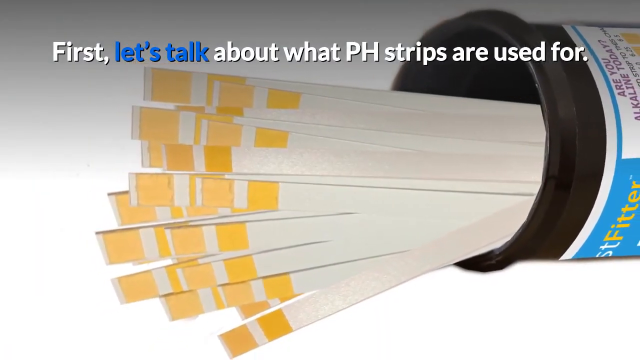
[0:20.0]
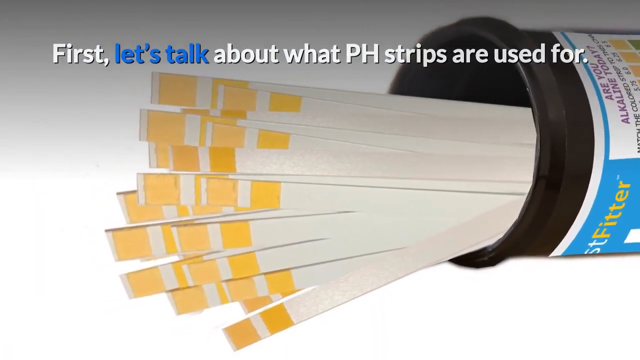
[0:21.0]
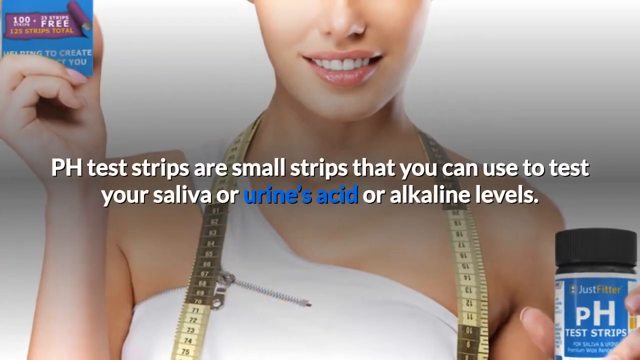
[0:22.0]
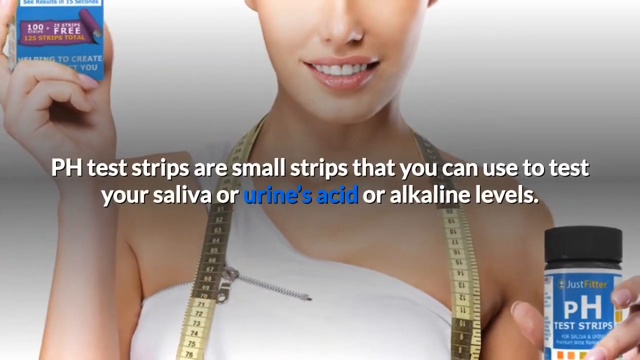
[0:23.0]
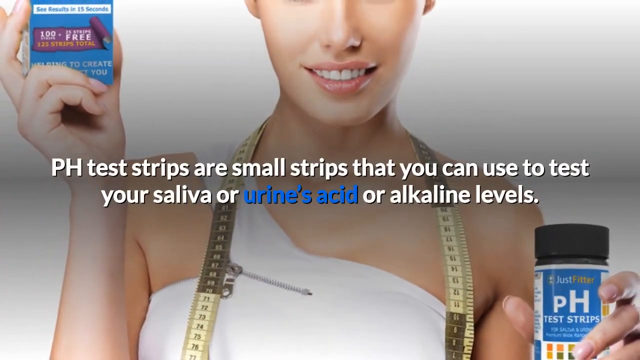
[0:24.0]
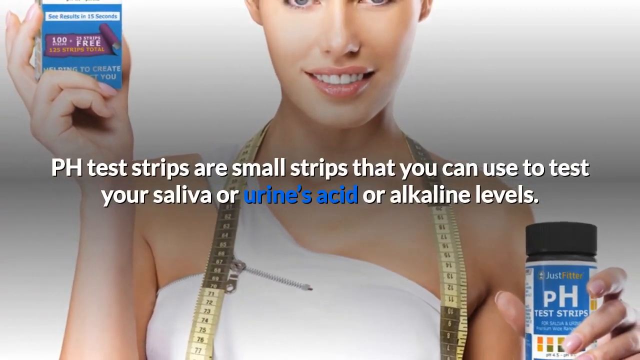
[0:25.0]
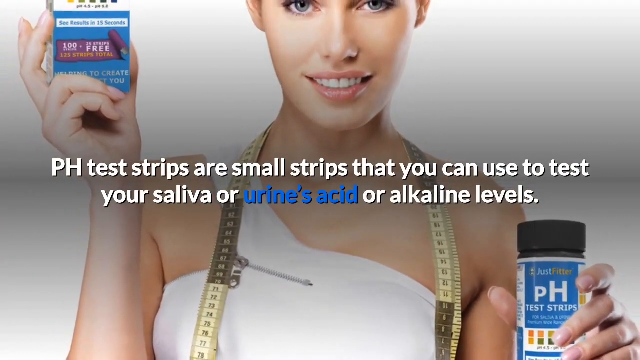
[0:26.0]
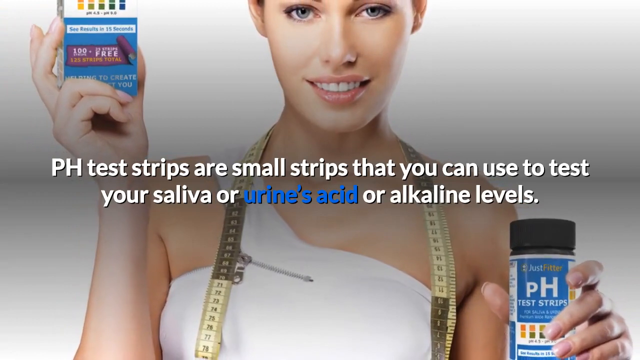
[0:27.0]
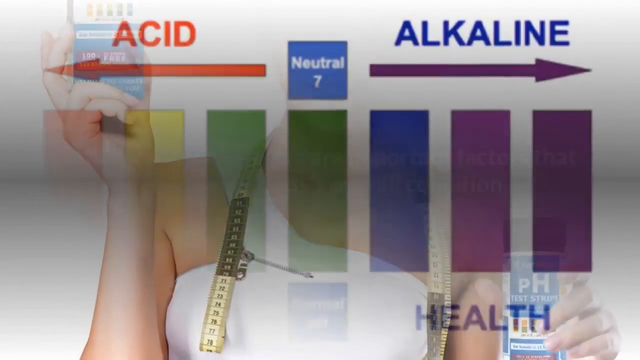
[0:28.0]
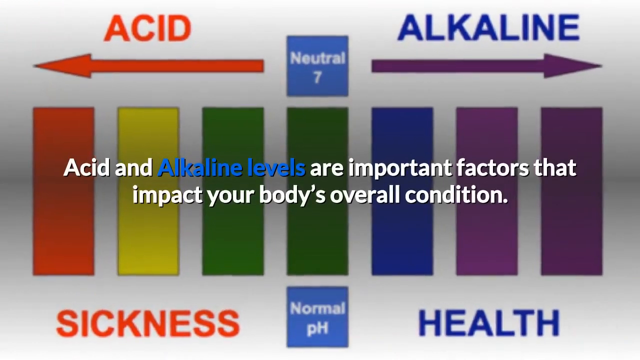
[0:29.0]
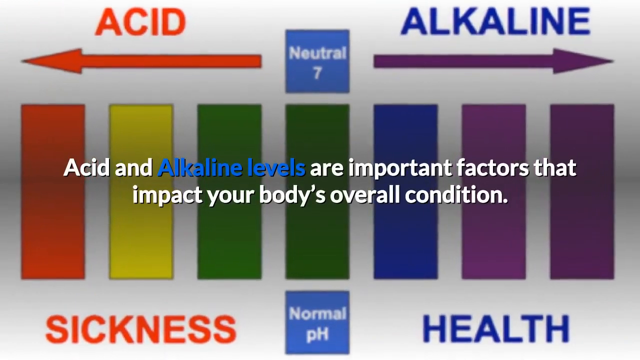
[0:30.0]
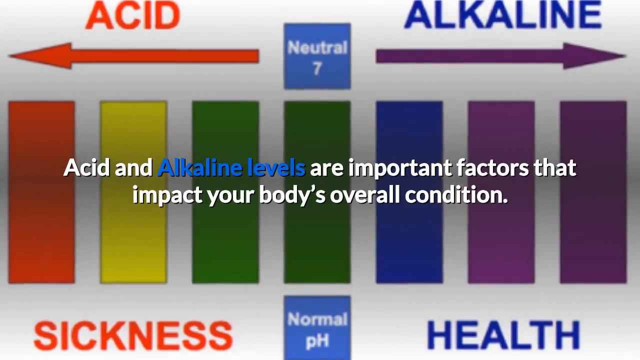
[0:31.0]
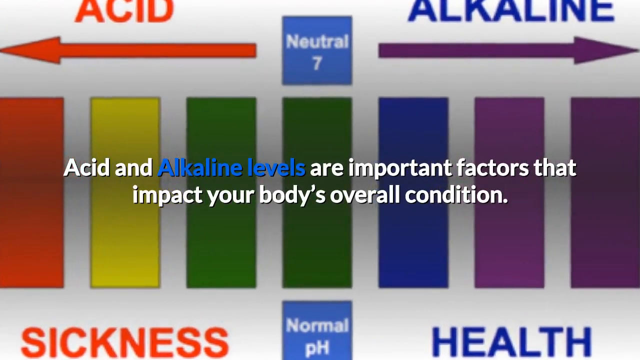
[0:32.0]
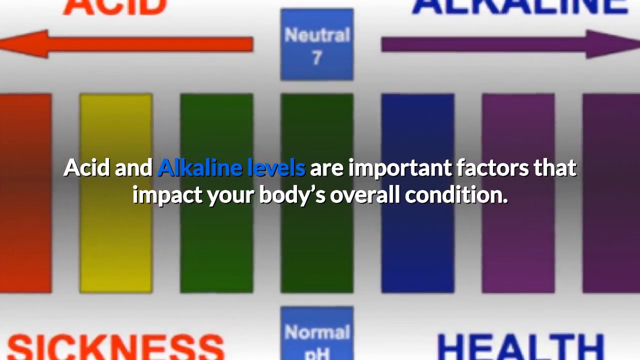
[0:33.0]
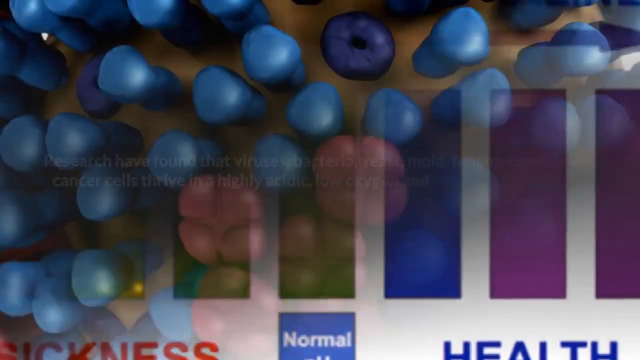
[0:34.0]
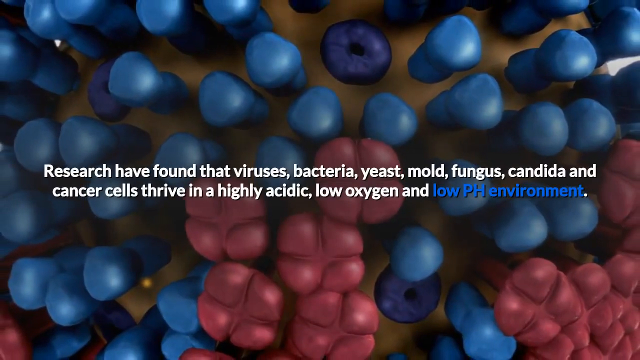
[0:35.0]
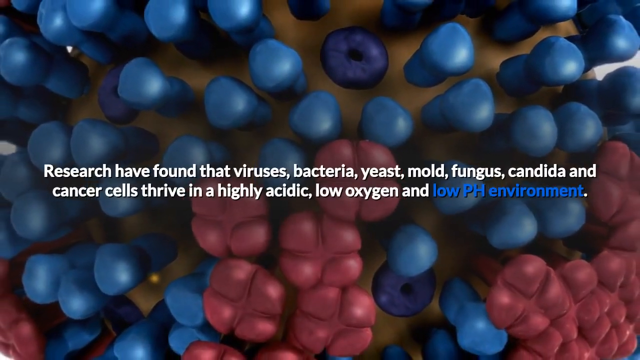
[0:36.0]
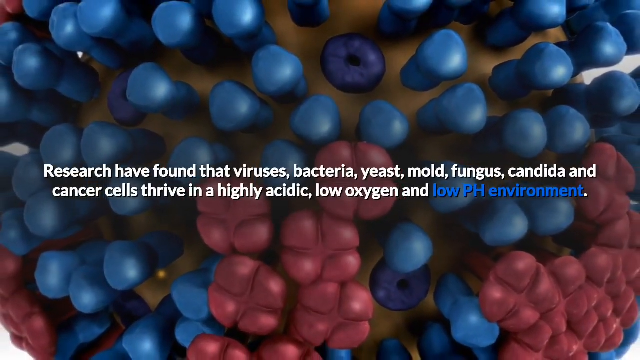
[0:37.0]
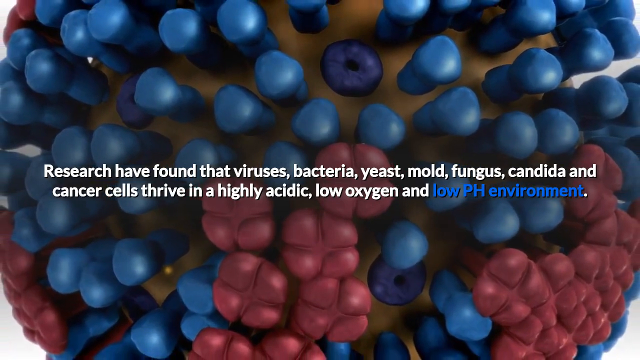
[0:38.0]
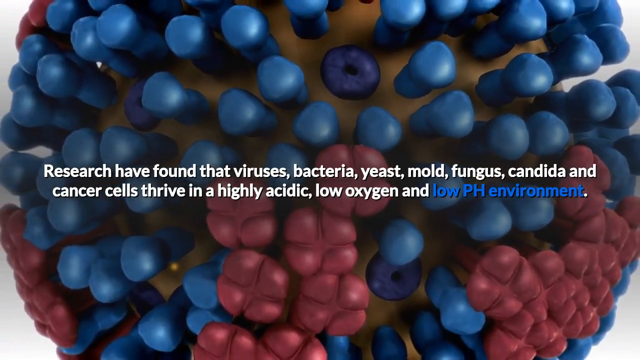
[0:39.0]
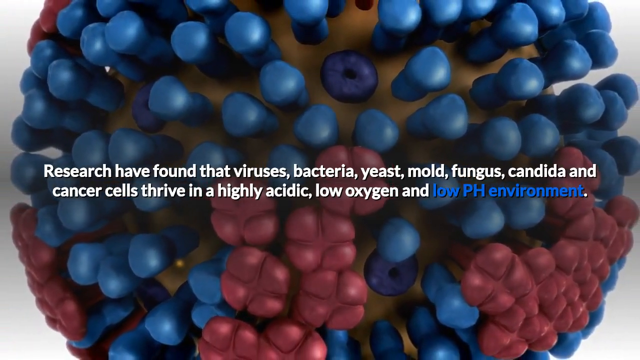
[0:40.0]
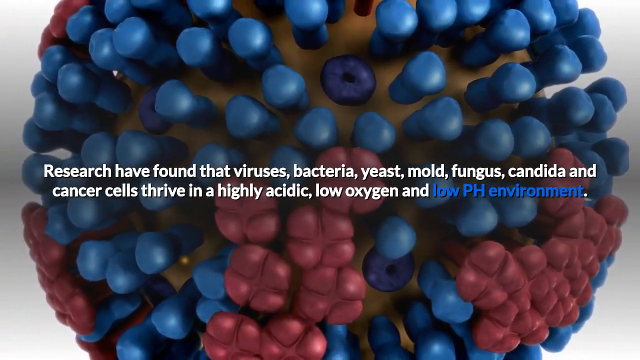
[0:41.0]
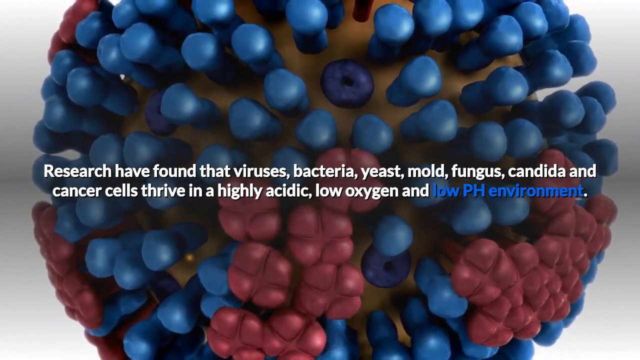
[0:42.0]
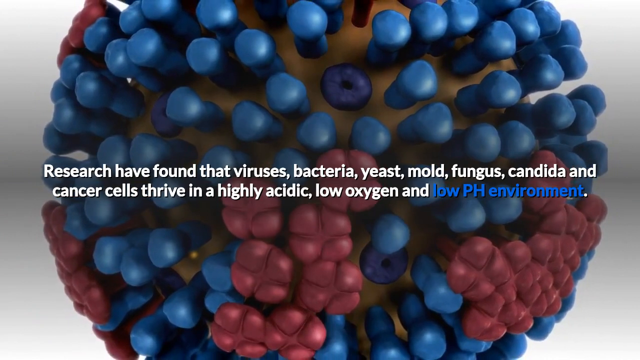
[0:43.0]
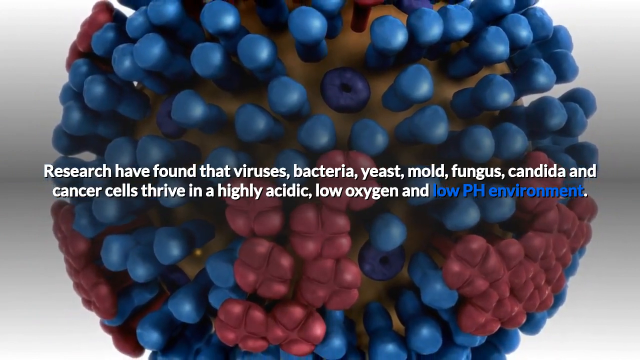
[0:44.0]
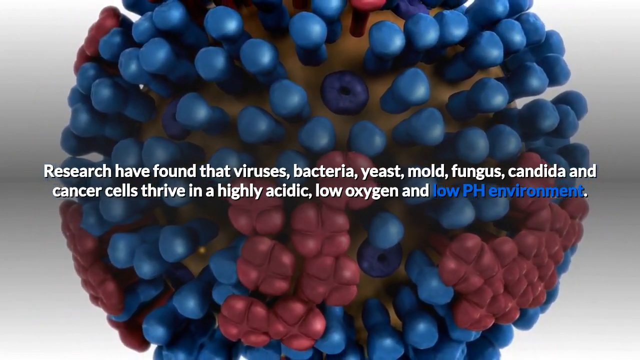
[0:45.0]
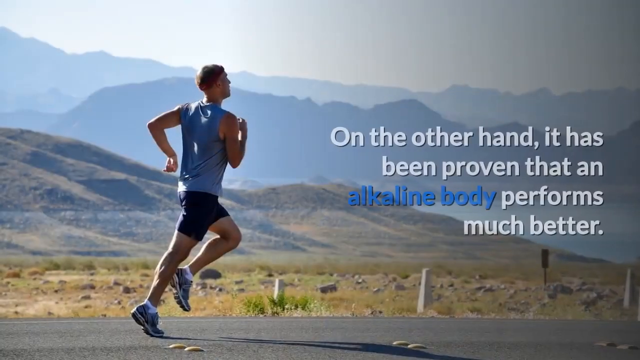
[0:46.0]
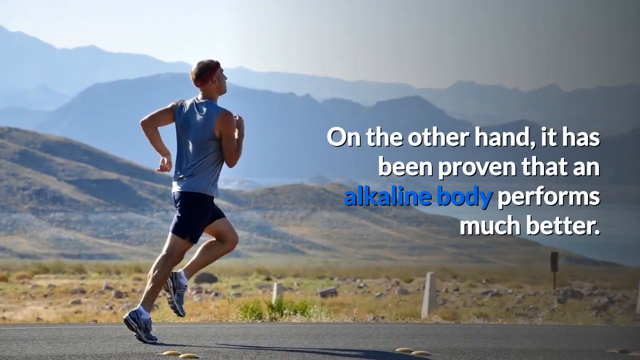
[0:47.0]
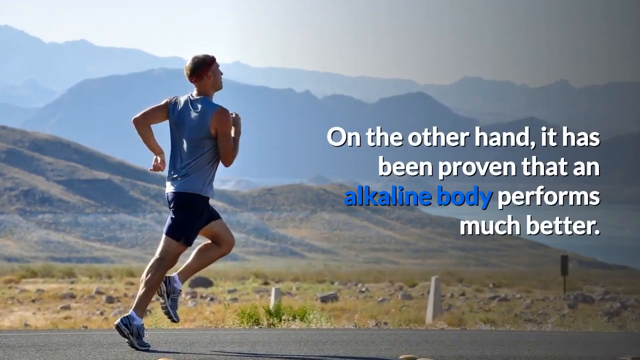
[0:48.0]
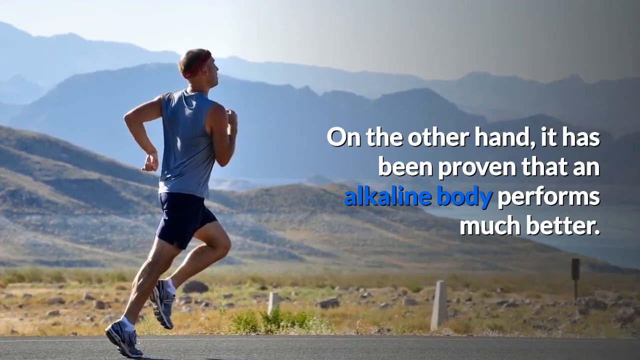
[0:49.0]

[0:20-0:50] A slide reads "is your body acidic? Many diseases thrive in an acidic environment." Below it is a diagram of many drawn bodies in different colors: orange, yellow, green, dark green, blue, navy blue, and purple. Beneath that, text reads "acidic equals poor health, alkaline equals good health." Text in the middle of the screen then reads "at first glance it may seem complicated to use, but in reality, it is a very easy process that can actually help change your life." The video cuts to another slide showing the black bottle open with many strips in it; the strips are white with yellow ends. Text at the top reads "first let's talk about what pH strips are used for." It then cuts to an image of a woman holding a box in her right hand and the bottle of pH strips in her left hand.